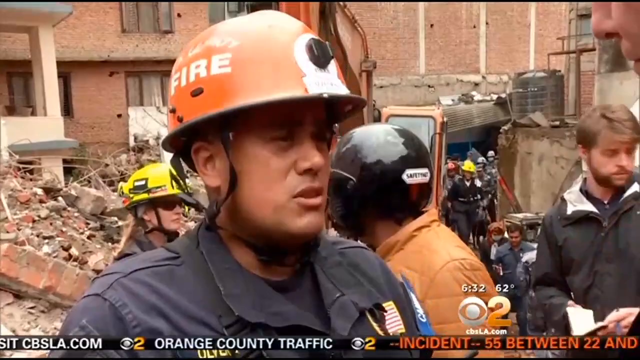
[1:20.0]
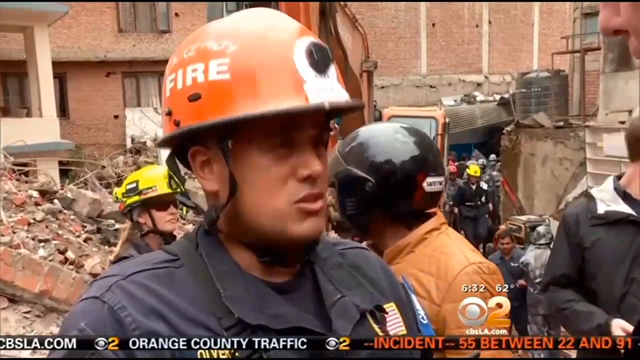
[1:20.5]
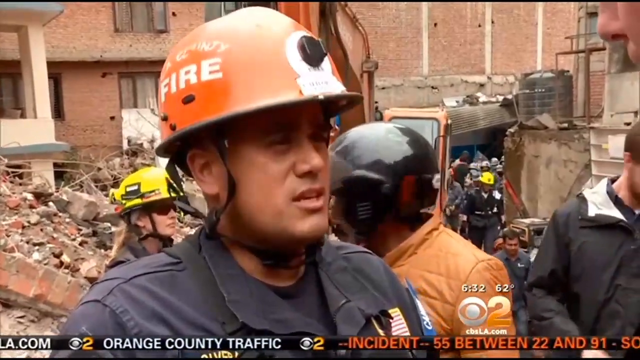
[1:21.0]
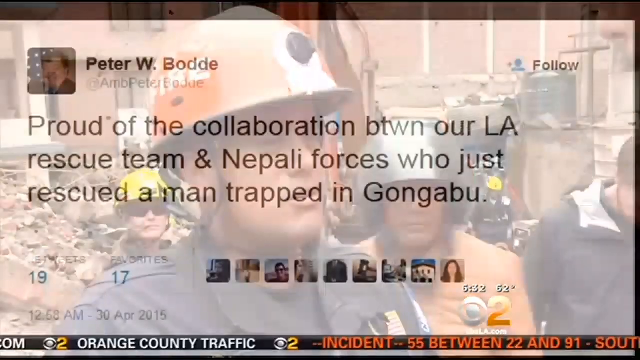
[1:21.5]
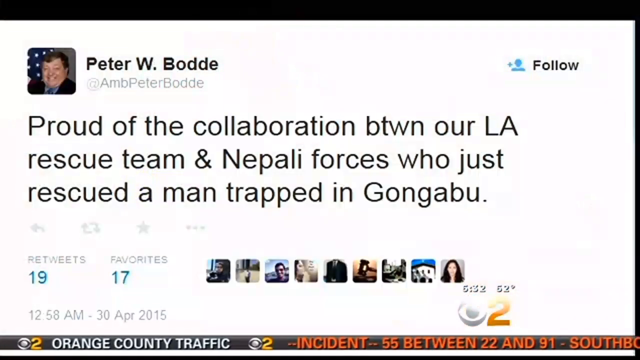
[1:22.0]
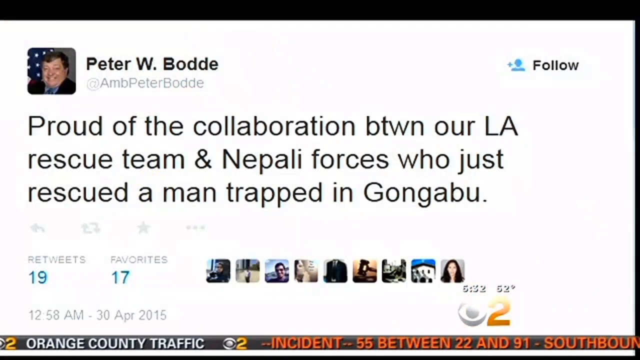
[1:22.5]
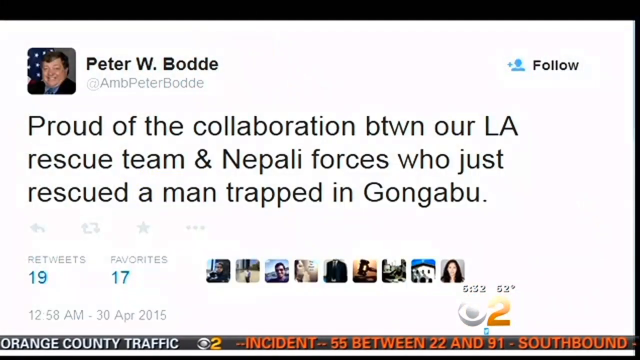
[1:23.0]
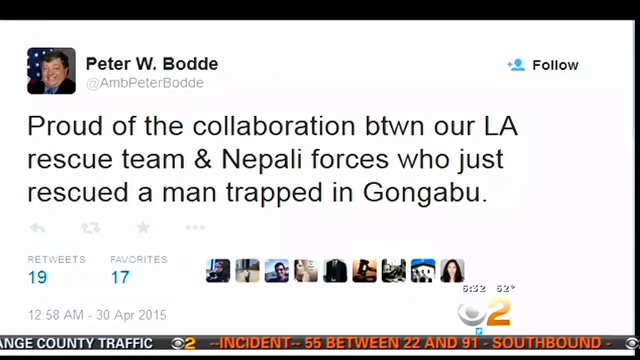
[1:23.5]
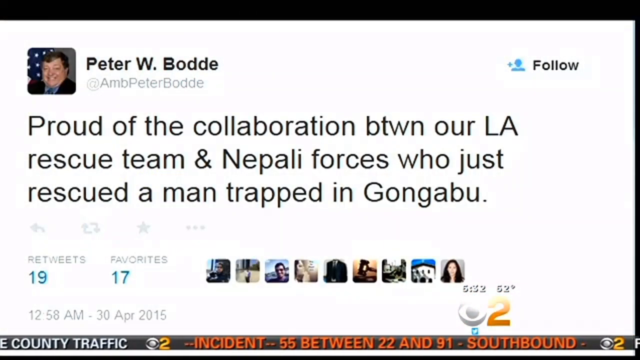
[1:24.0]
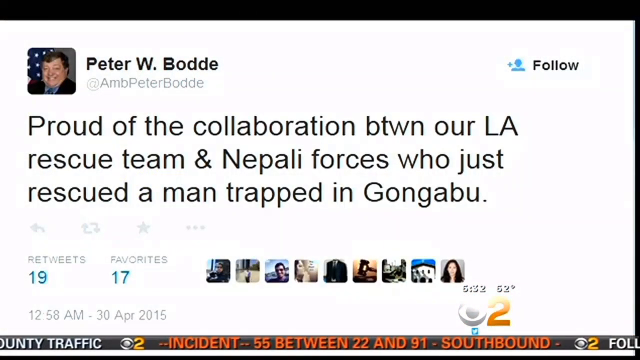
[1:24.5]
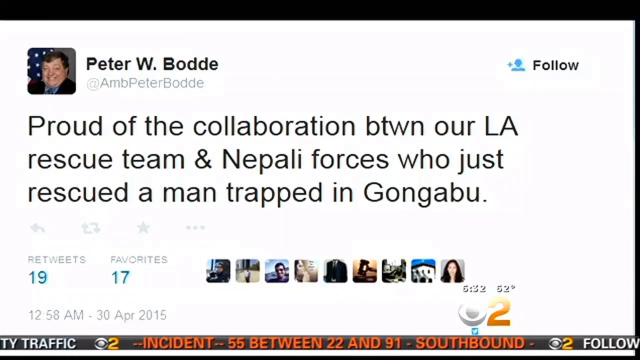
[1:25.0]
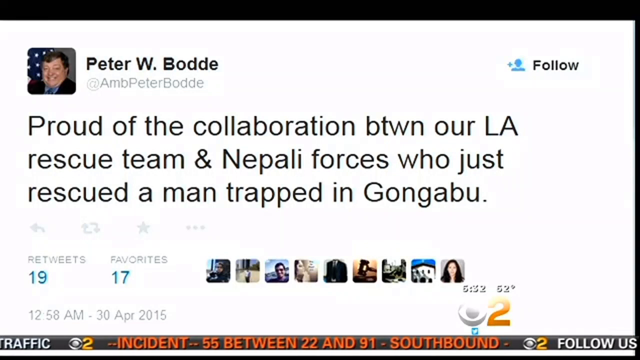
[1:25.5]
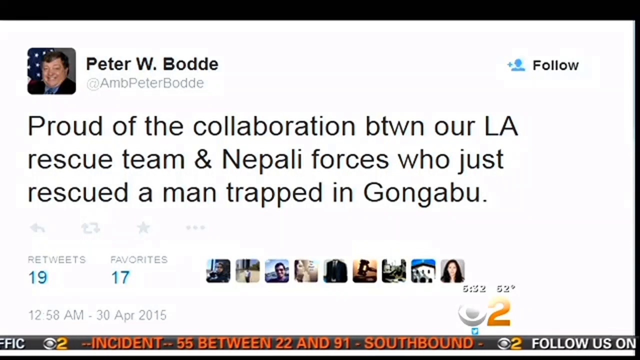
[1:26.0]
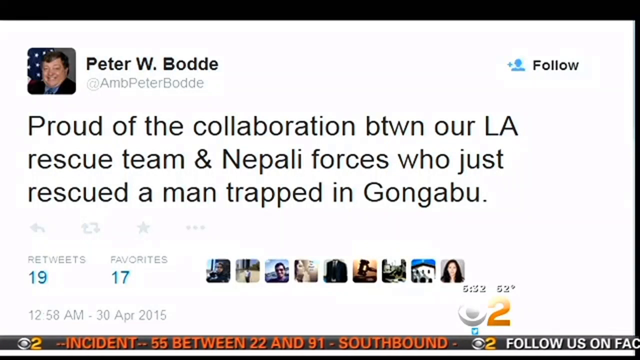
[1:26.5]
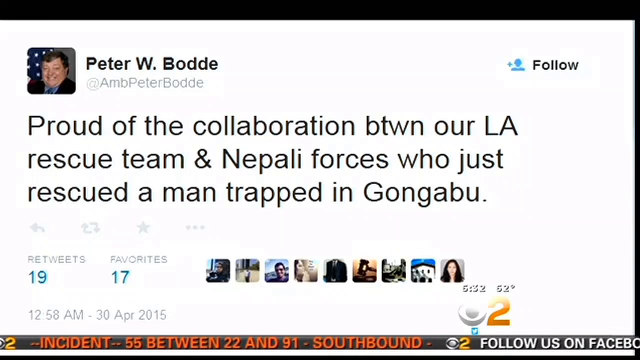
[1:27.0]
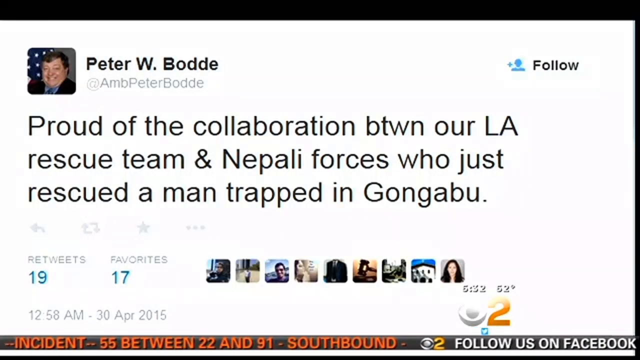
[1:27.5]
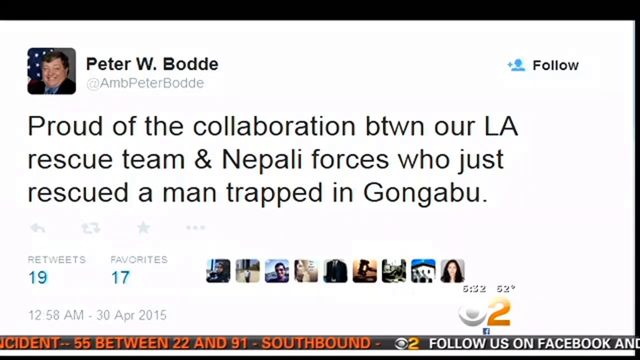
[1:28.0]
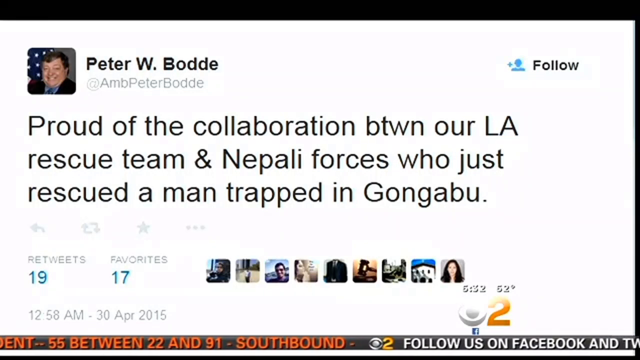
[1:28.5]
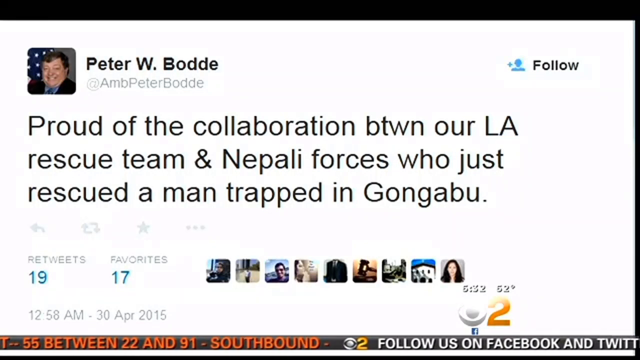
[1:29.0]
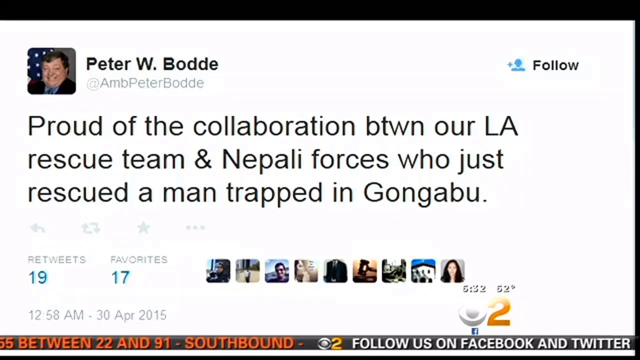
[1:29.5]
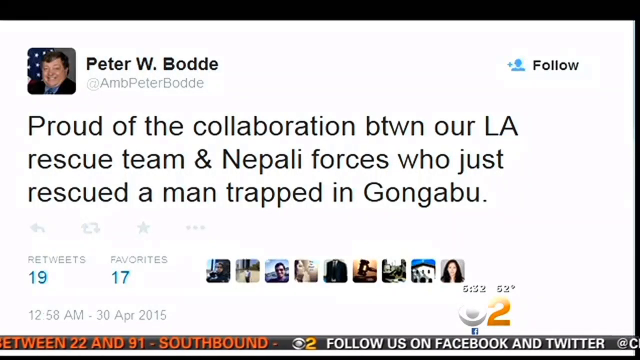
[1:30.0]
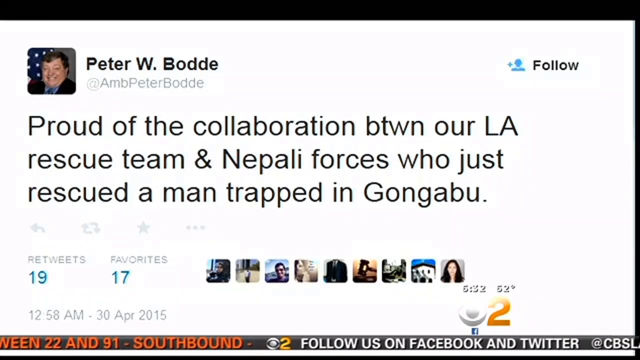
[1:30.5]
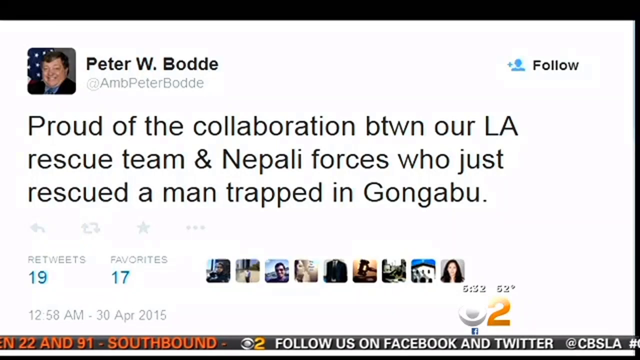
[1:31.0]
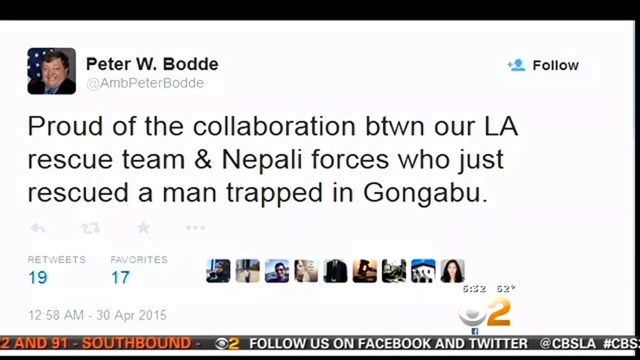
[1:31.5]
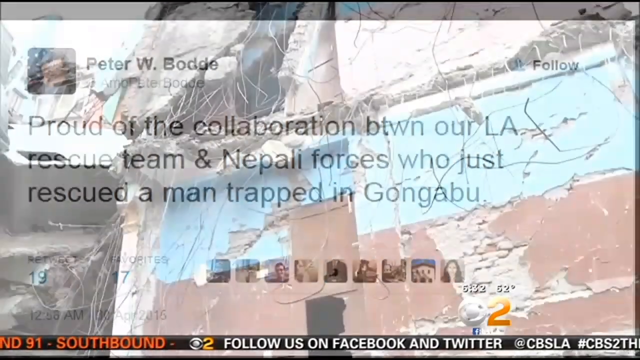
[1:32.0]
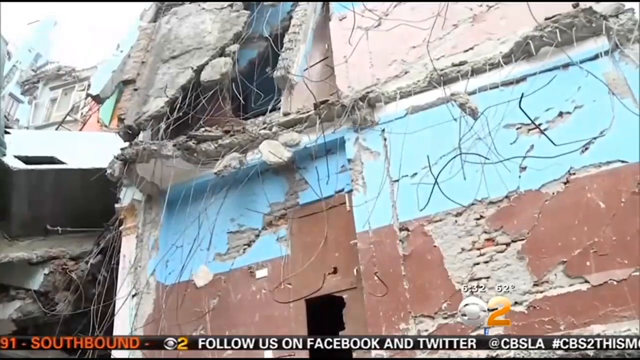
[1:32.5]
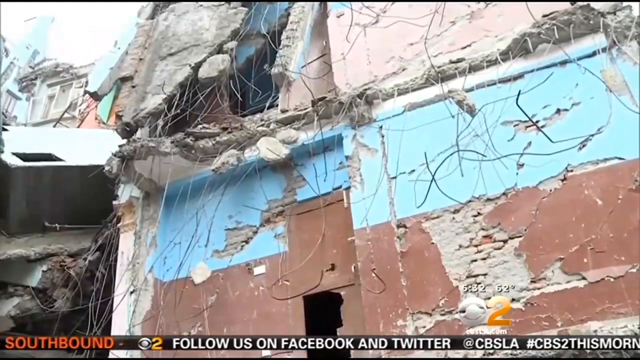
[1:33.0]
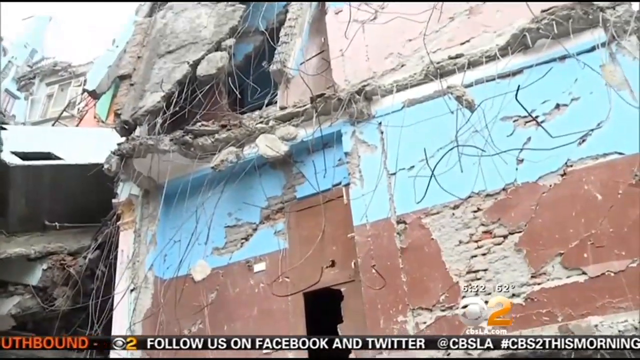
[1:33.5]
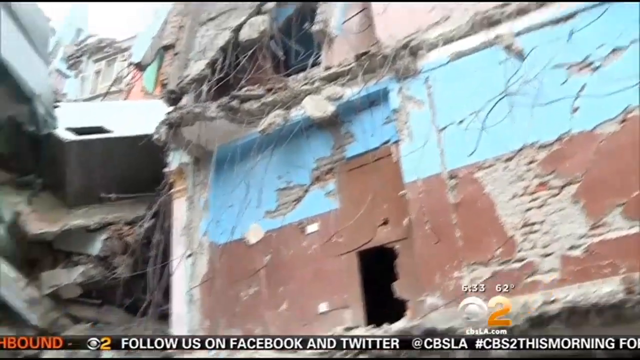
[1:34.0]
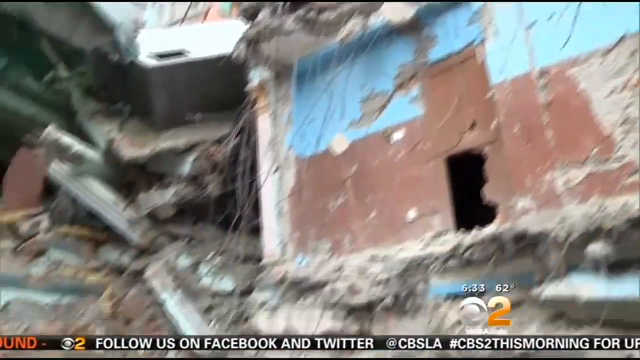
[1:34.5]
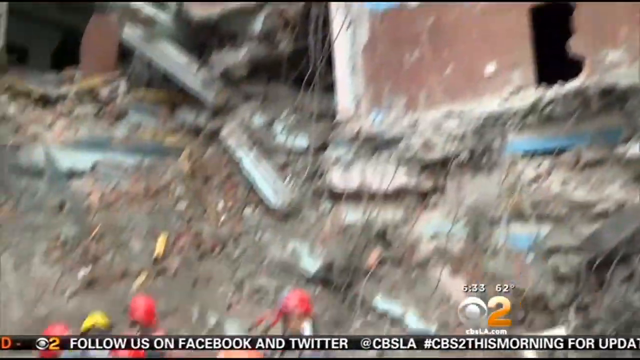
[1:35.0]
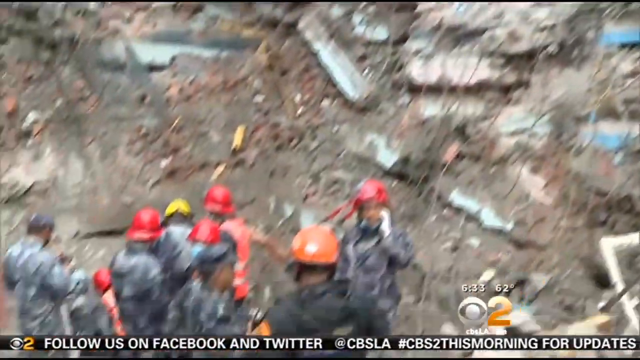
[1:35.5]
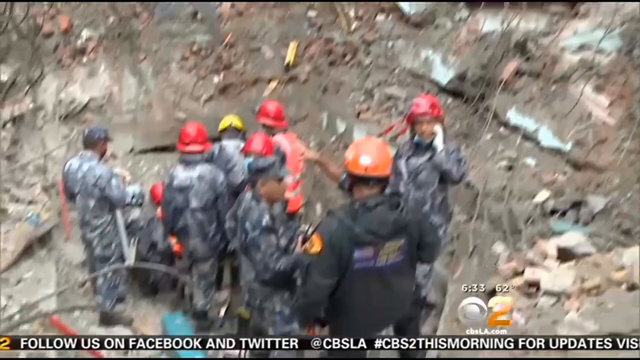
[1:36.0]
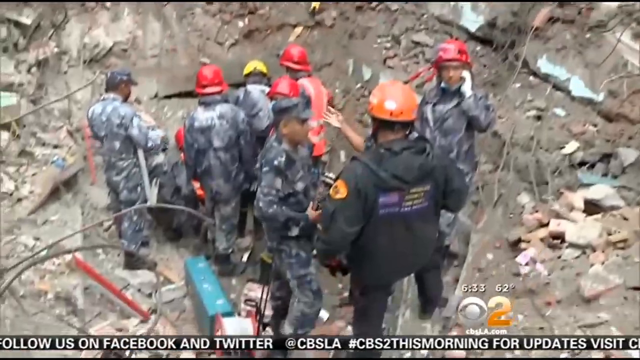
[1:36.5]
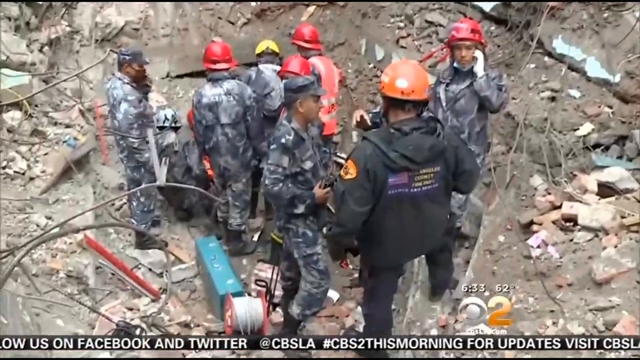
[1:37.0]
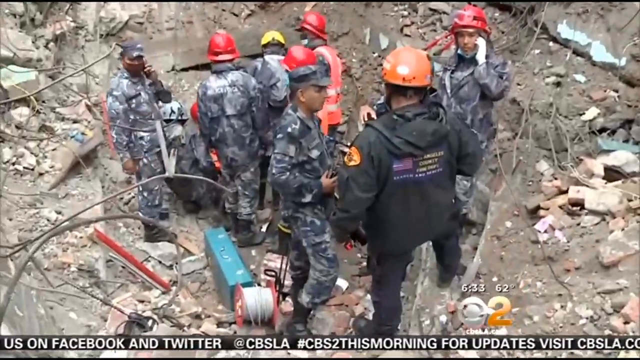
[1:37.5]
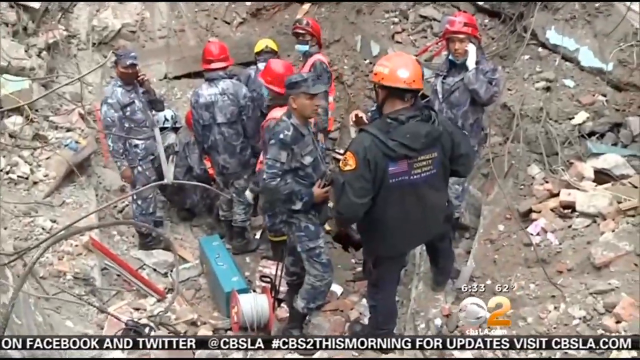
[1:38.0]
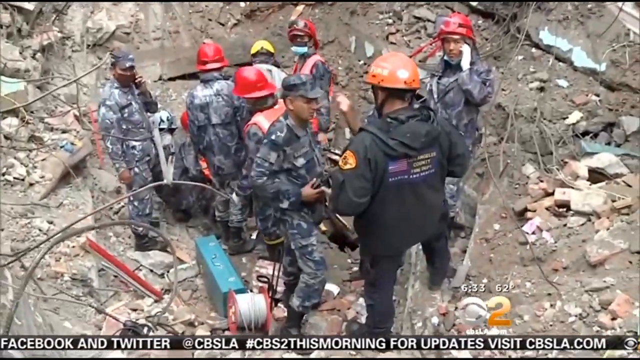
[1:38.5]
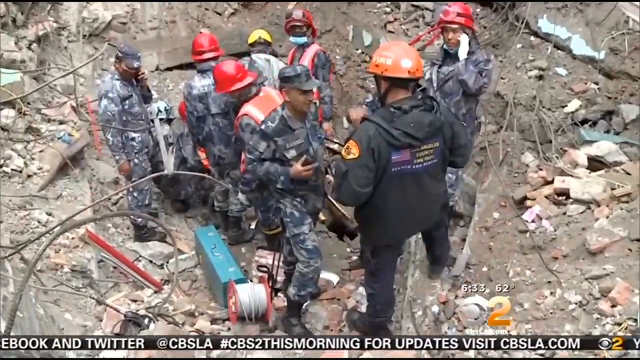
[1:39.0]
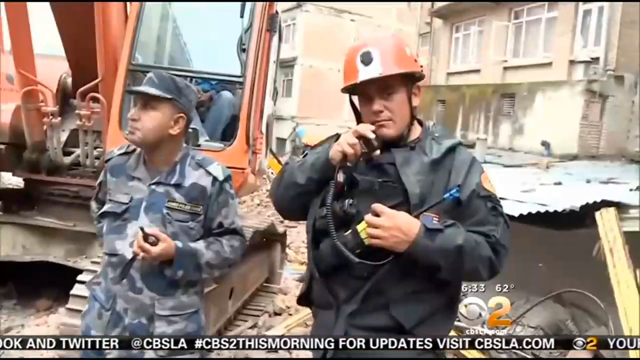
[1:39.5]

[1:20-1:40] A man in a blue jumpsuit and an orange hard hat with the word "FIRE" written on it in white letters is interviewed by someone off camera. Behind him stands another man facing away from the camera, wearing a black helmet, along with two other men, one wearing a yellow helmet and one with no helmet. Behind them is the rubble of a building. A tweet from Peter W. Bode then appears, reading "Proud of the collaboration between our L.A. rescue team and Nepali forces who just rescued a man trapped in Gongabu." The next scene shows a building damaged by an earthquake and in rubble, followed by a hole with seven men standing with their backs to the camera. Four of them wear red hard hats, one wears an orange helmet, and one wears a yellow hard hat. Two wear army caps, and six of the men wear army fatigues.